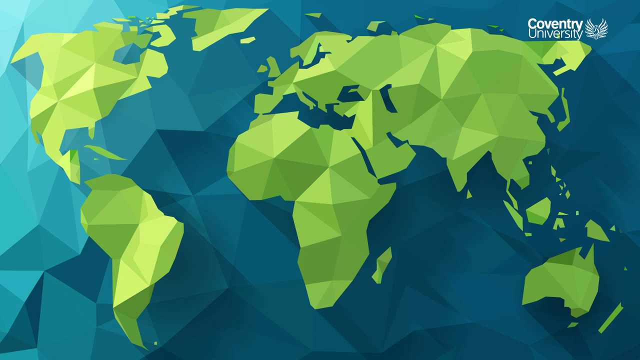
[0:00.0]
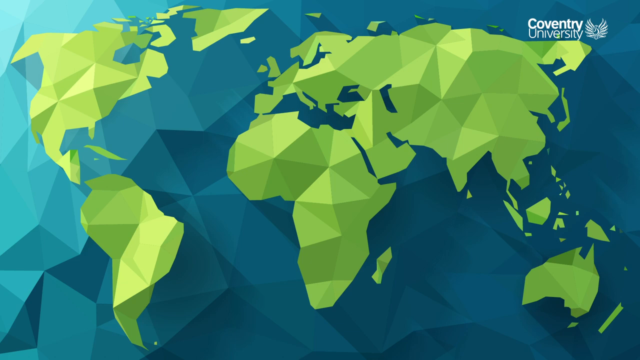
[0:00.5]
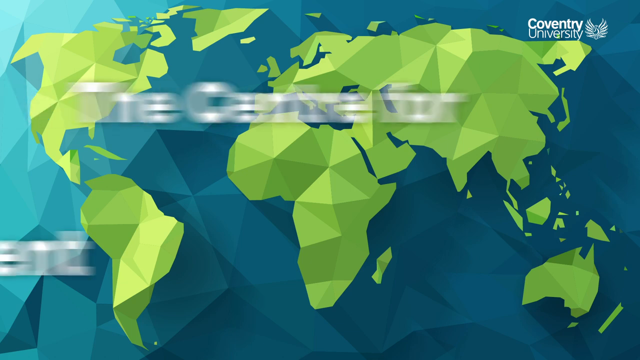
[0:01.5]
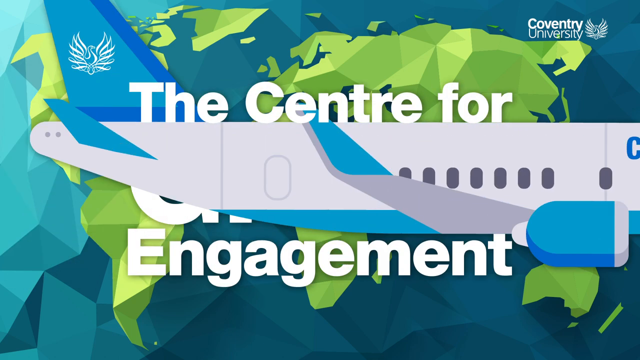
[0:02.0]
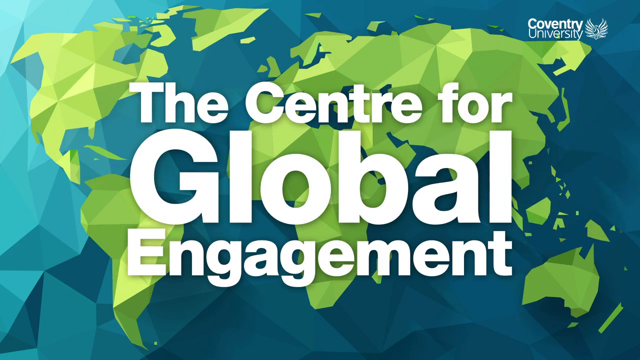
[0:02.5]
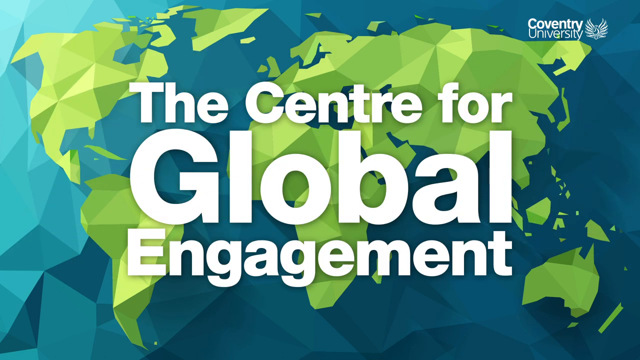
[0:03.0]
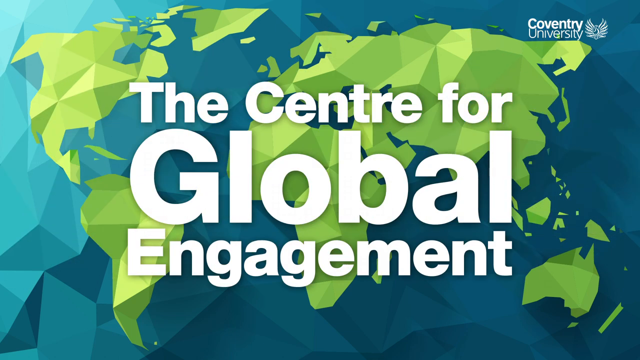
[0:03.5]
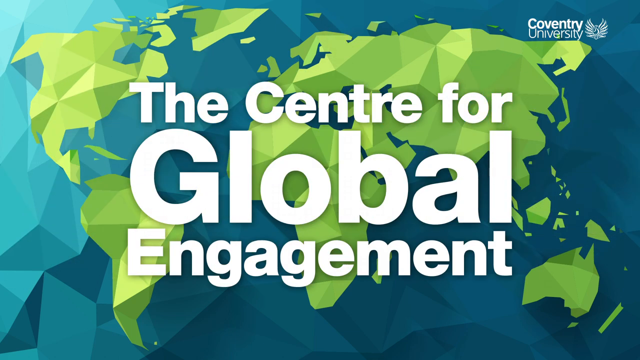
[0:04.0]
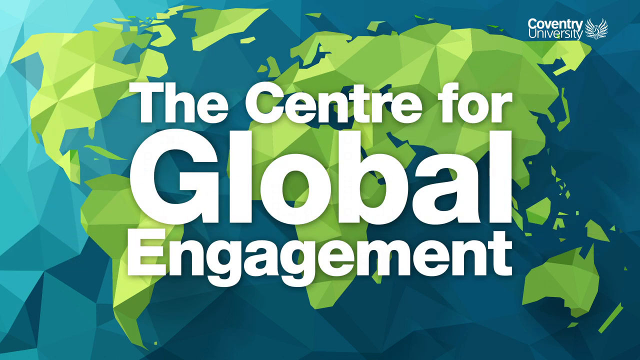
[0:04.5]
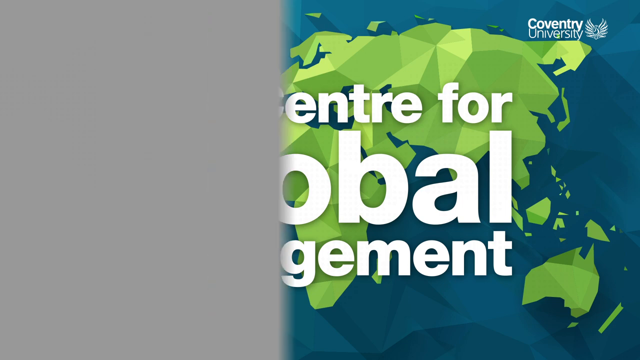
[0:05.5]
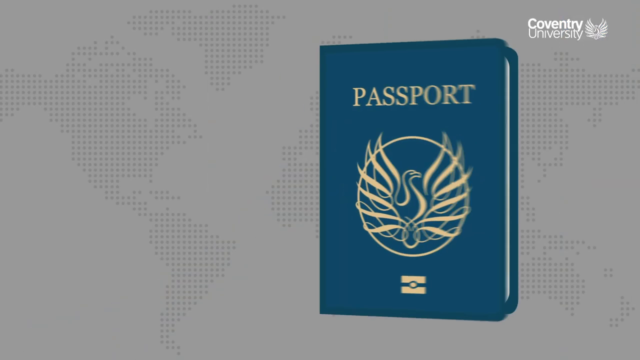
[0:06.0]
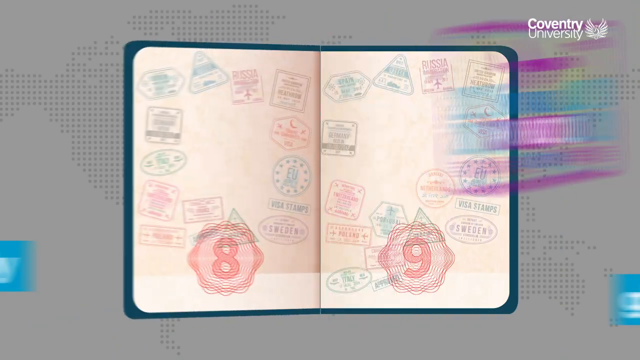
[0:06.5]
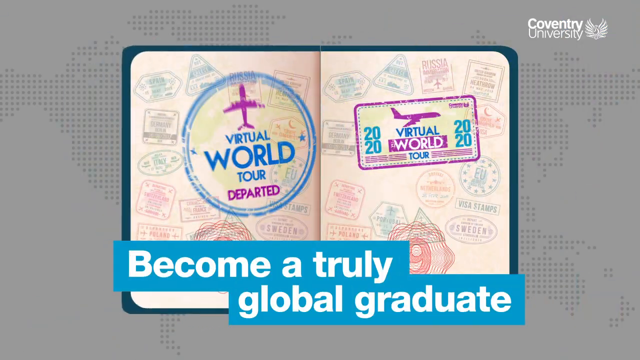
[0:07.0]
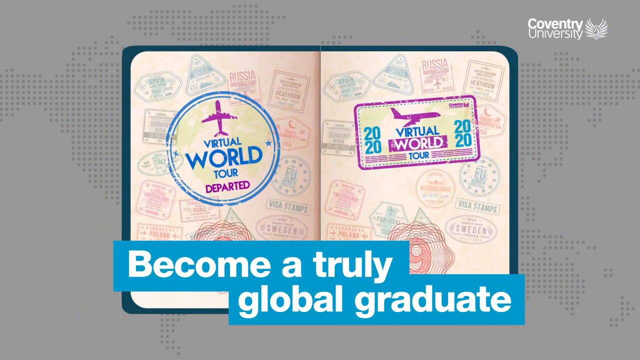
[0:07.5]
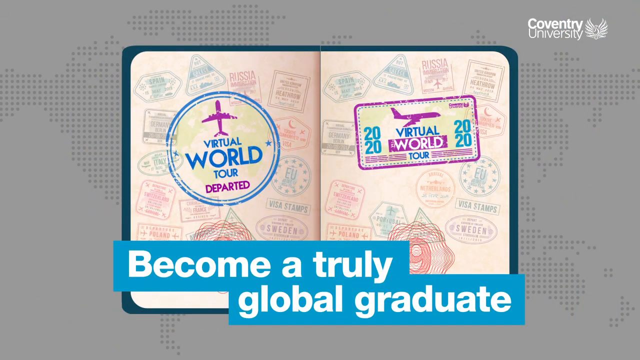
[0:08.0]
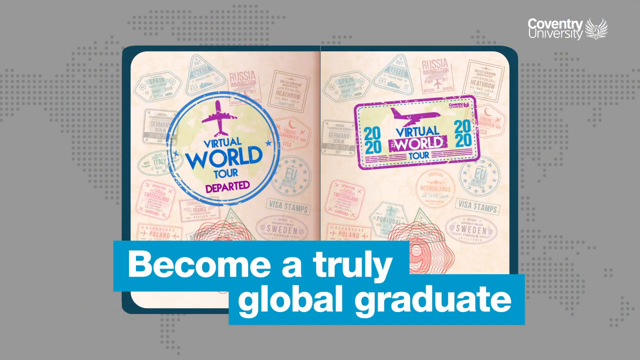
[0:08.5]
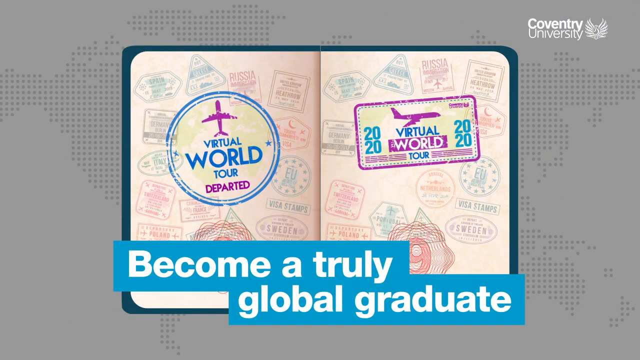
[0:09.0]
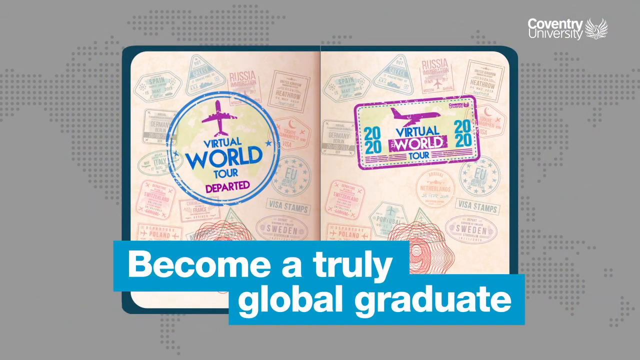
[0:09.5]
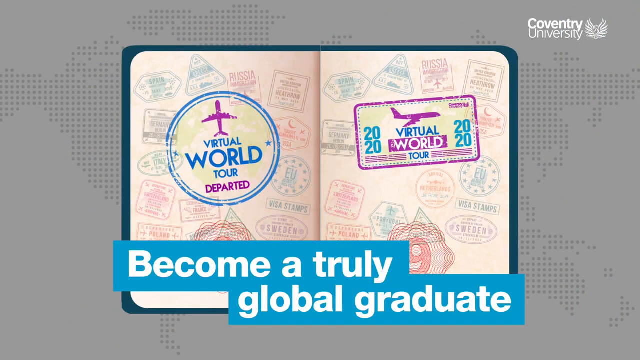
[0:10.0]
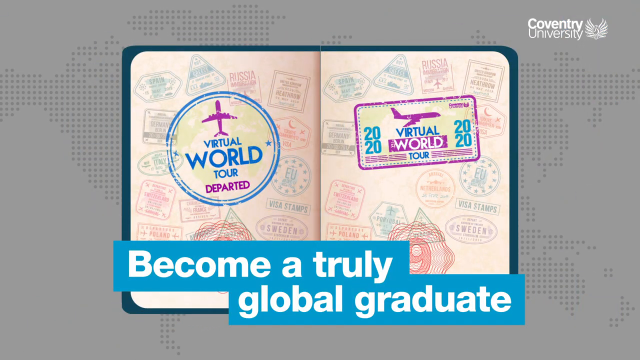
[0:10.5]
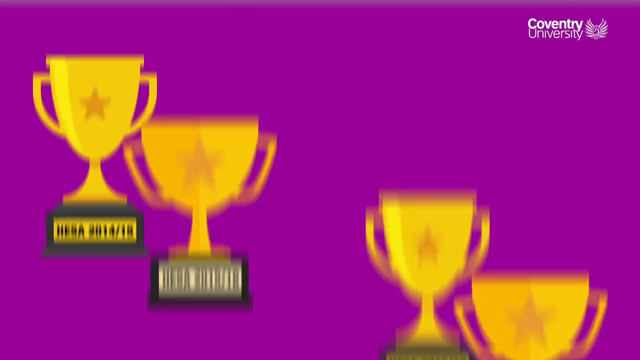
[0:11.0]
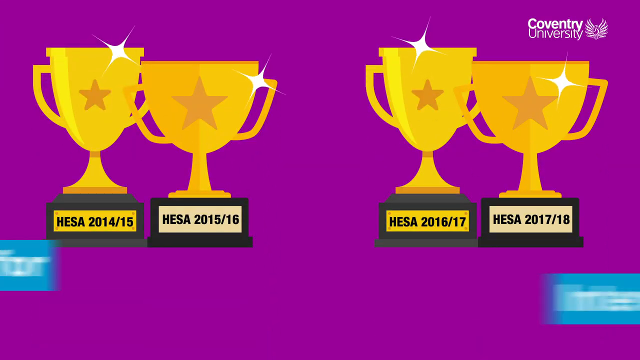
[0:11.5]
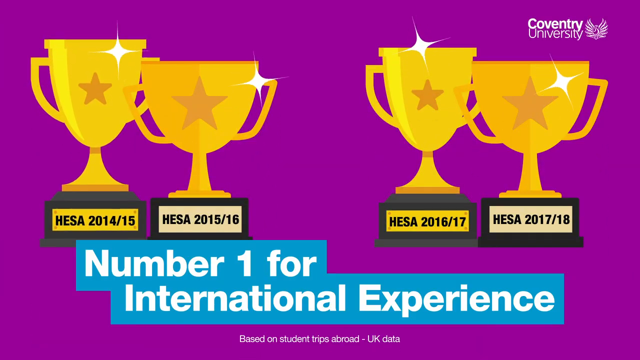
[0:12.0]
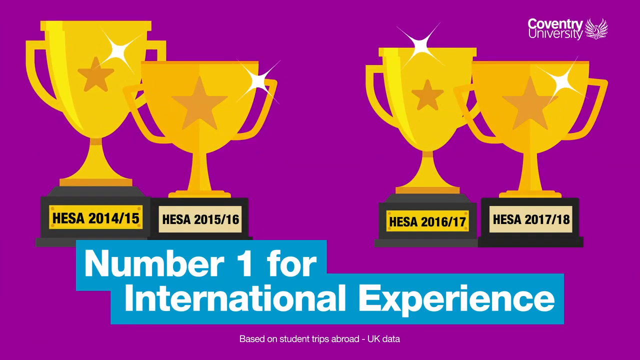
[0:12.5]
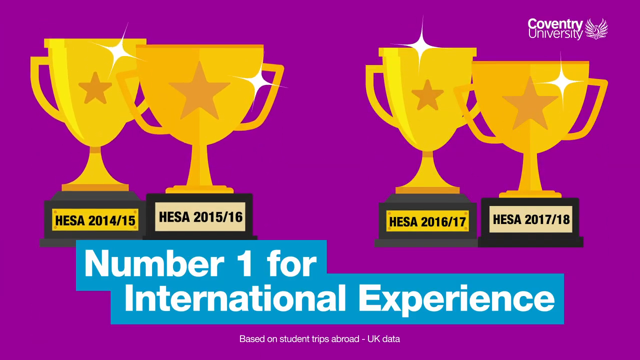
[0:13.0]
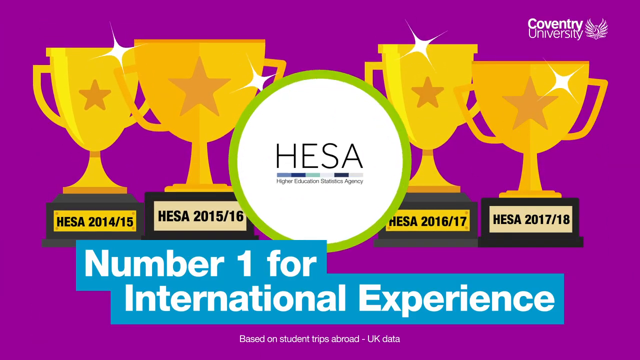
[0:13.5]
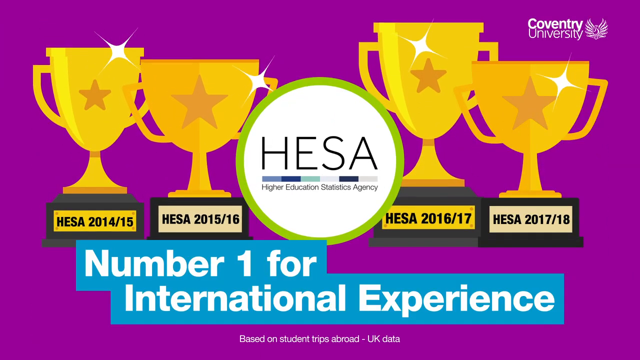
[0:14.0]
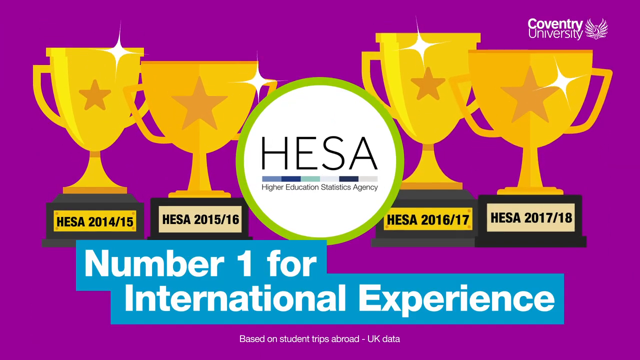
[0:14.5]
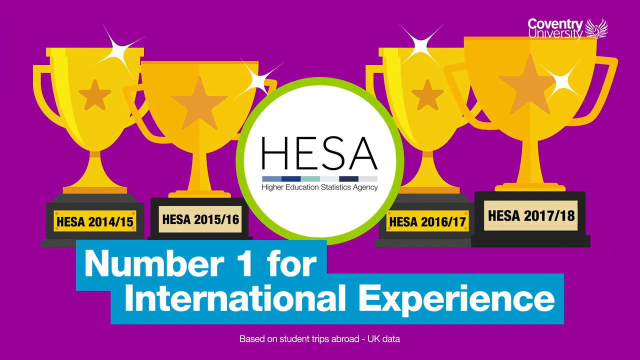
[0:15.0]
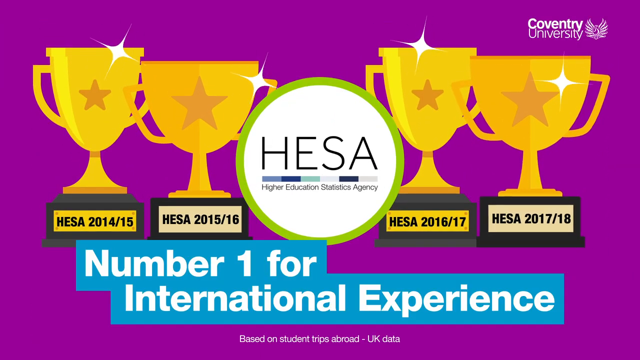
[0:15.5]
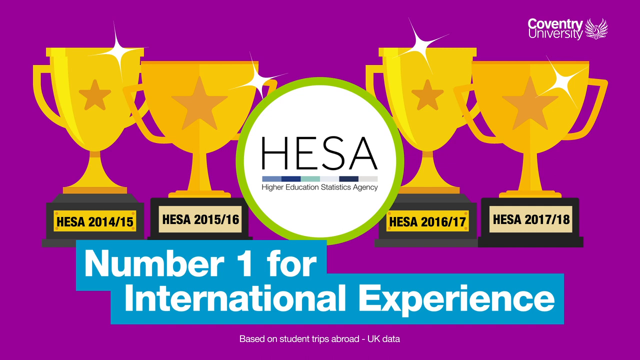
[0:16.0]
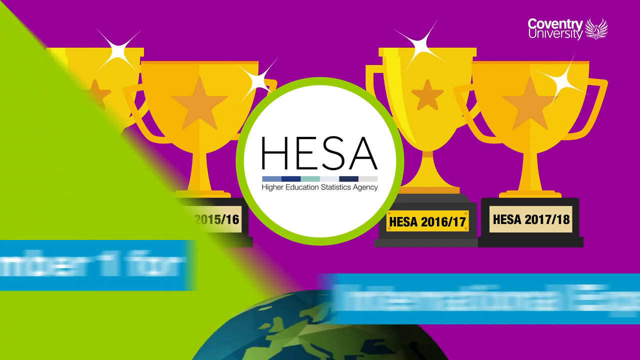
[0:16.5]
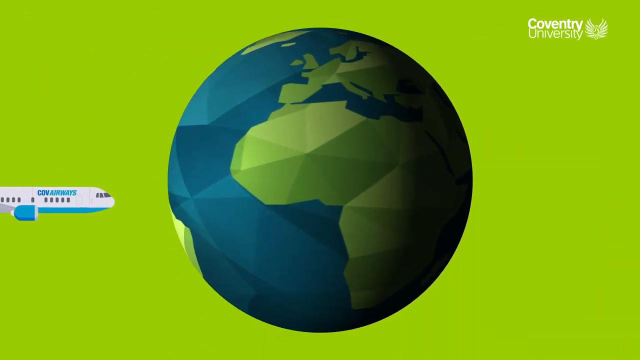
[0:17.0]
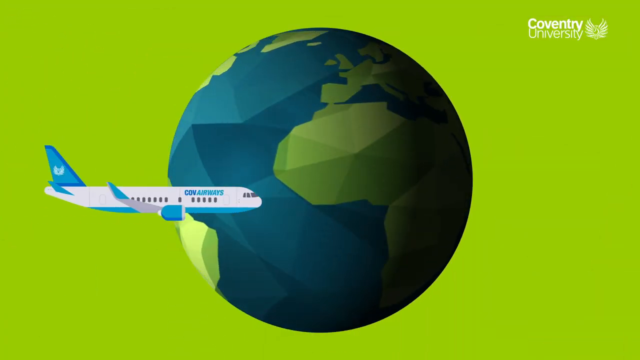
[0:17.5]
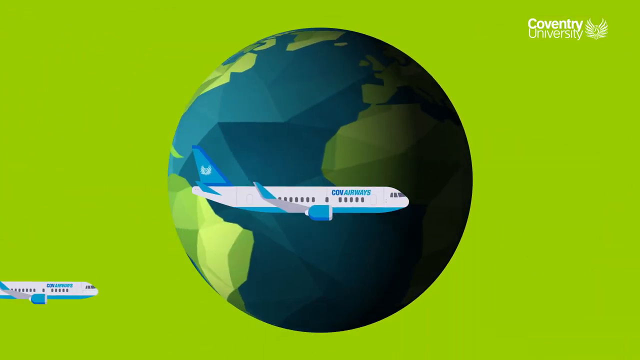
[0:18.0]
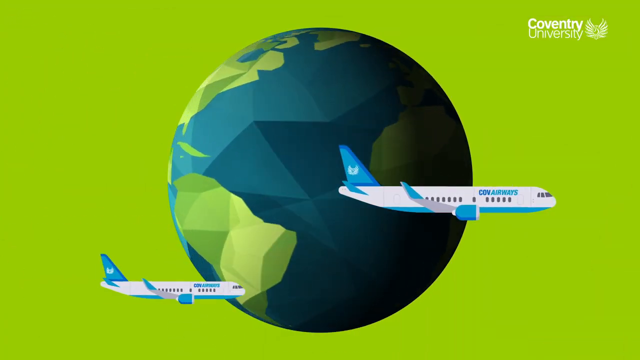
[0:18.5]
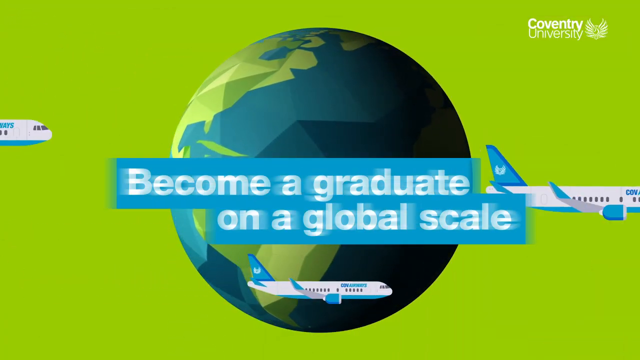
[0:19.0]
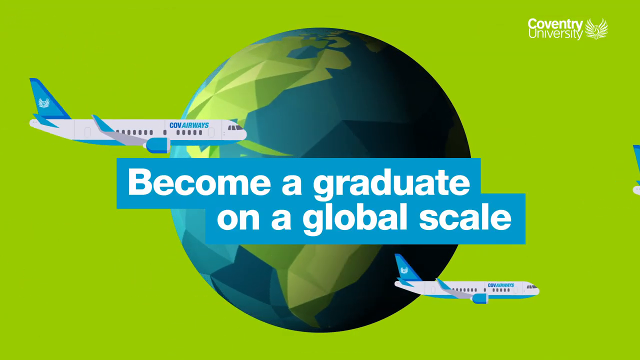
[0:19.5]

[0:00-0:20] A blue map shows the countries in green; the map is through Coventry University. On the map, in large, bold white letters, are the words "the Center for Global Engagement." The next page features a blue passport on a gray background. The passport is open, showing several stamps: a circle stamp with a blue airplane that says "Virtual World Tour Departed," and, on the left-hand side of the passport, a square stamp with a purple airplane that says "Virtual World Tour 2020." At the bottom of the page, bold white lettering reads "Become a truly global graduate." Next comes a purple page with several gold trophies for HESA 2014, 2015, 2015, 2016, 2016, 2017, 2017 and 2018. At the bottom of the page, bold white lettering reads "Number 1 for international experience," along with "HESA, Higher Education Statistics Agency." Then a blue globe with the world in green goes around in a circle, with the words "Become a graduate on a global scale."